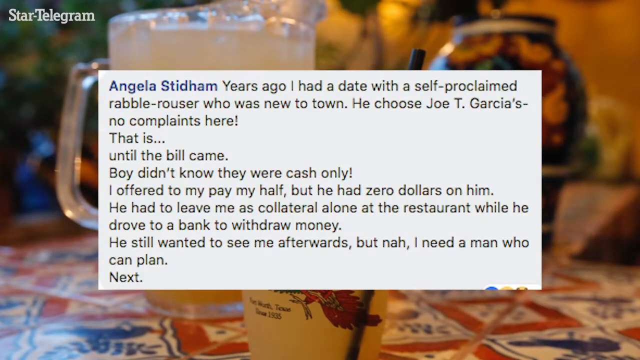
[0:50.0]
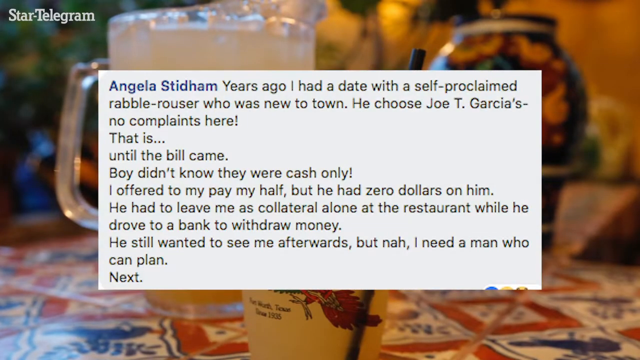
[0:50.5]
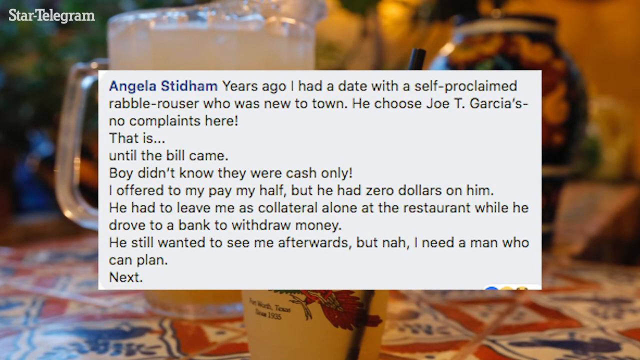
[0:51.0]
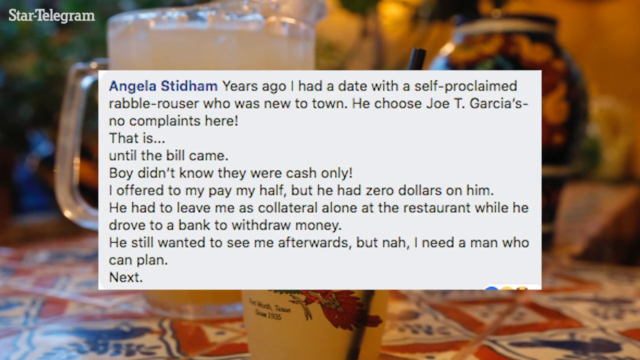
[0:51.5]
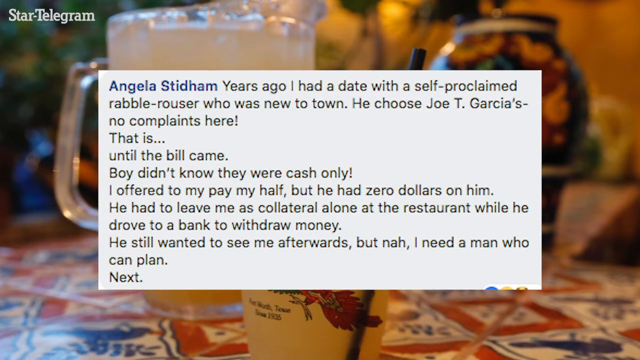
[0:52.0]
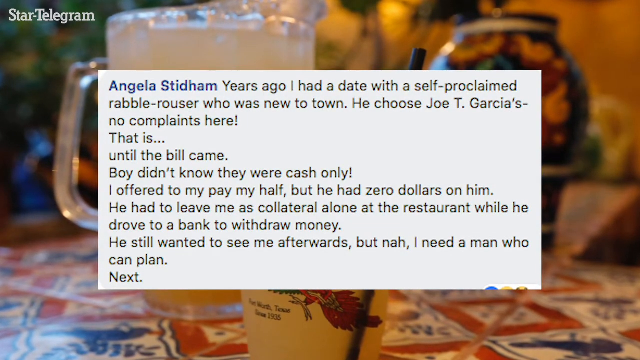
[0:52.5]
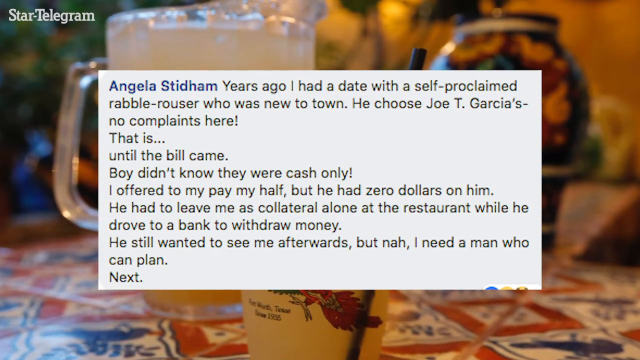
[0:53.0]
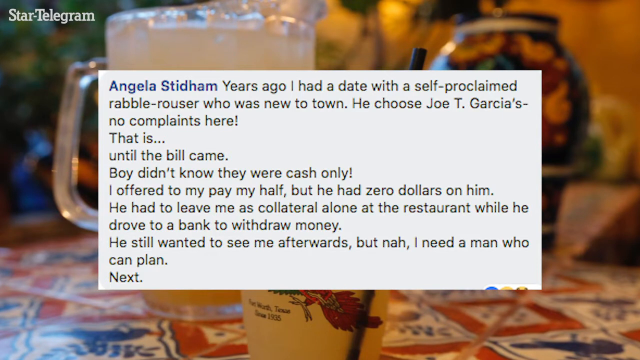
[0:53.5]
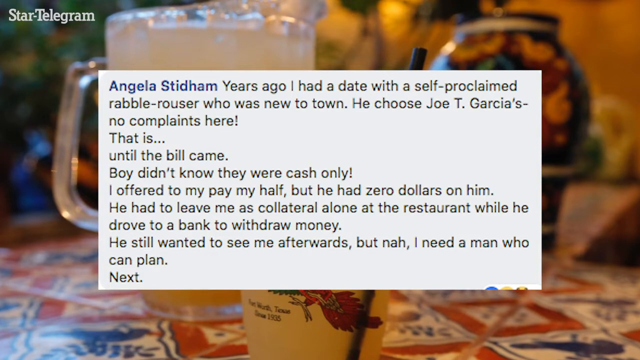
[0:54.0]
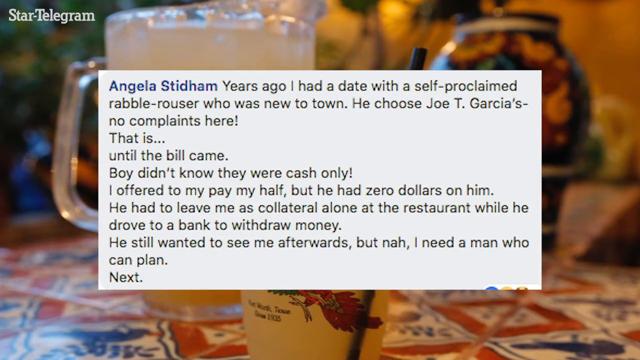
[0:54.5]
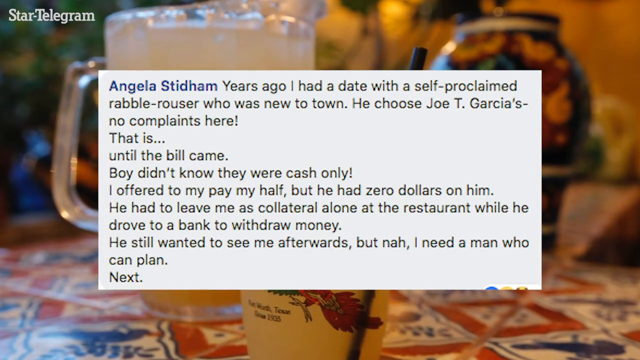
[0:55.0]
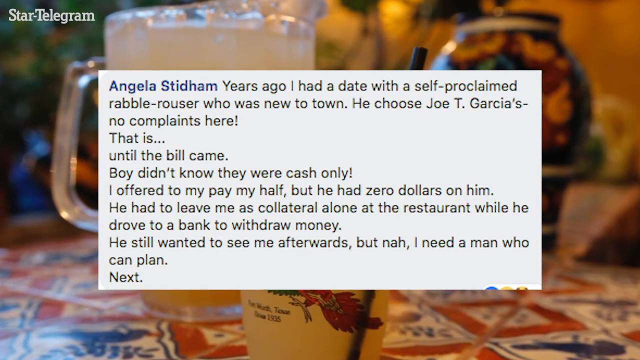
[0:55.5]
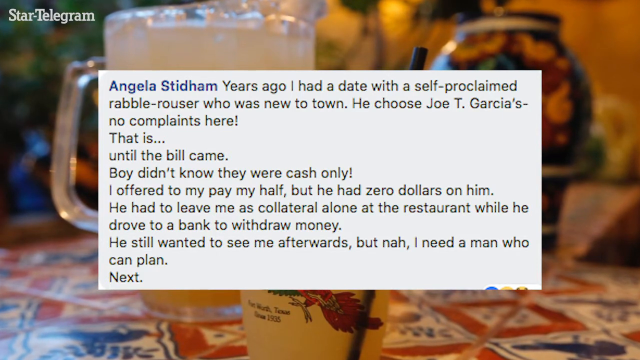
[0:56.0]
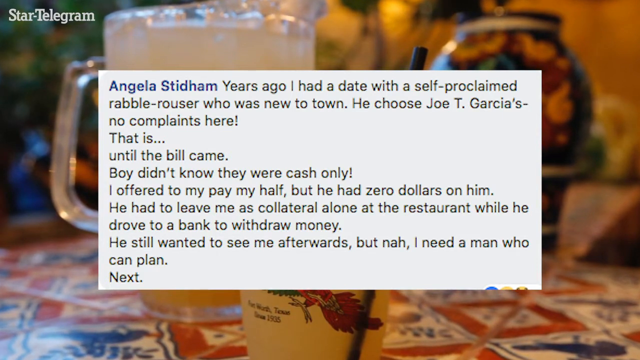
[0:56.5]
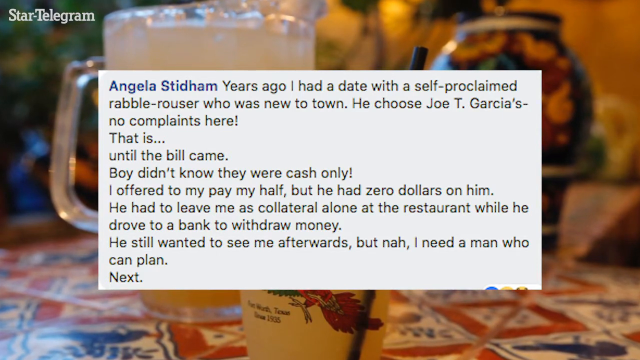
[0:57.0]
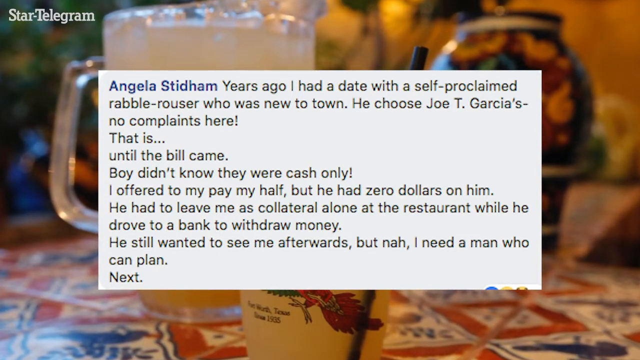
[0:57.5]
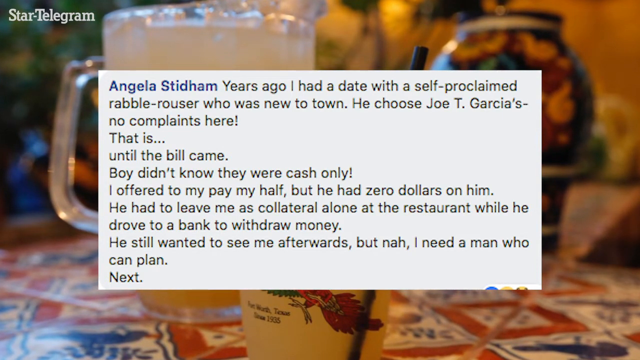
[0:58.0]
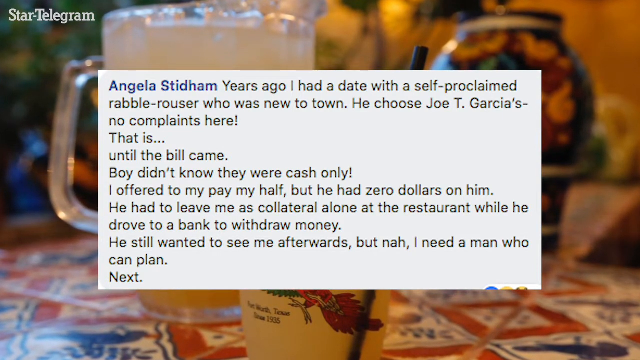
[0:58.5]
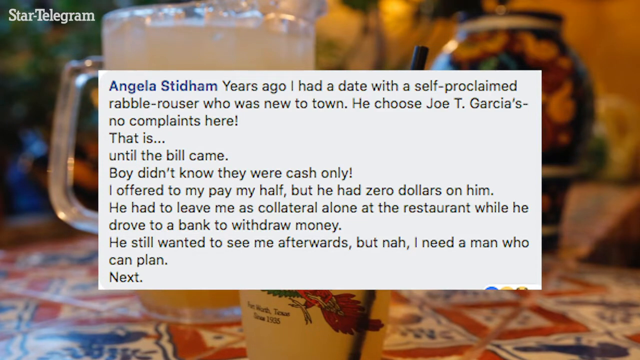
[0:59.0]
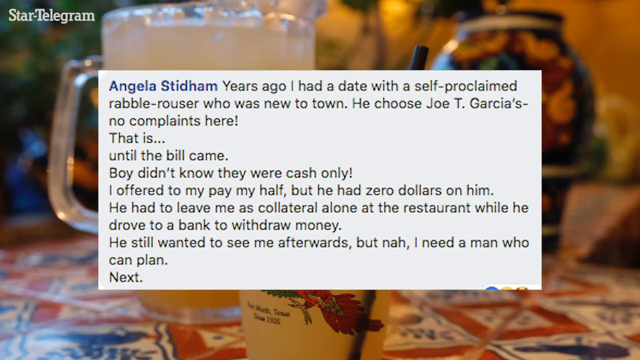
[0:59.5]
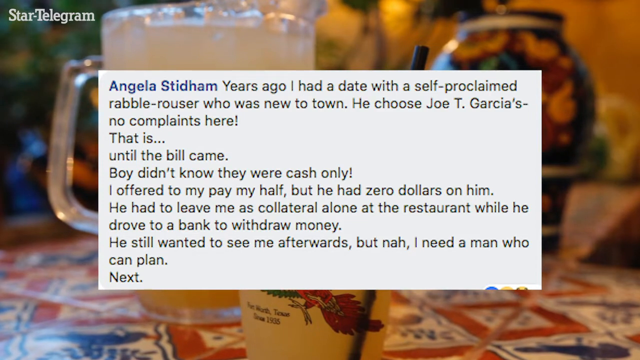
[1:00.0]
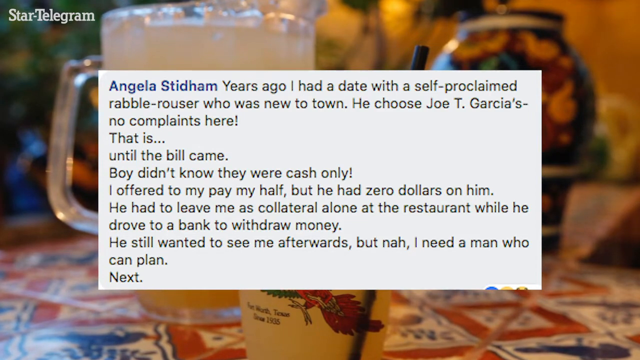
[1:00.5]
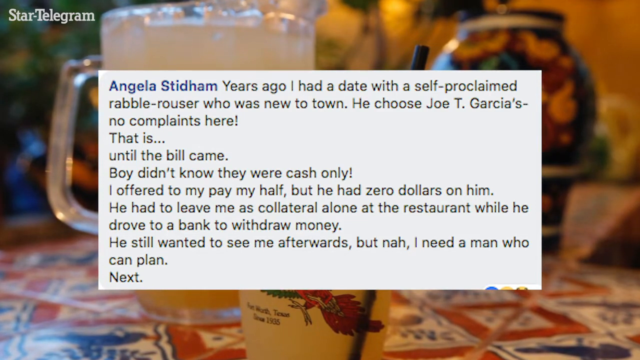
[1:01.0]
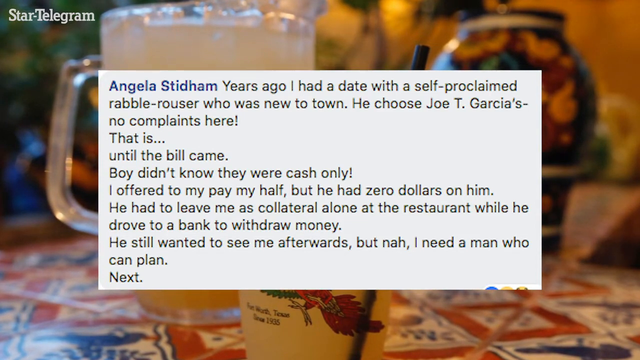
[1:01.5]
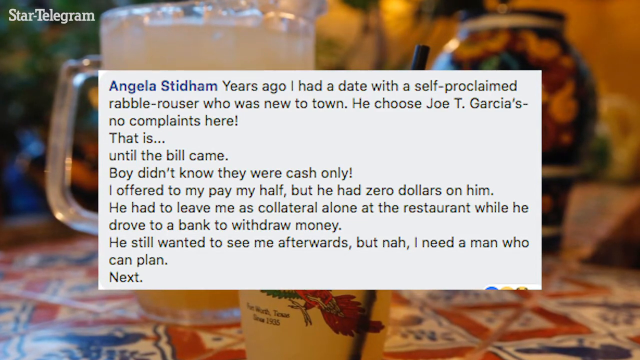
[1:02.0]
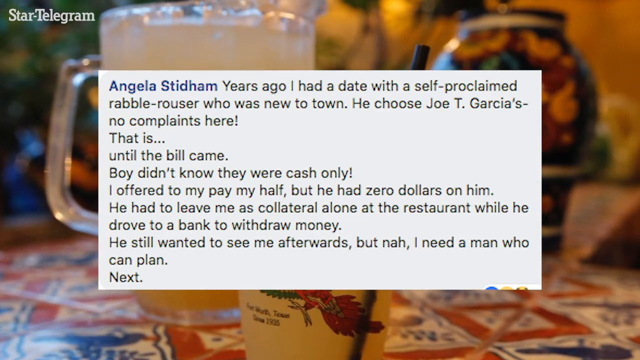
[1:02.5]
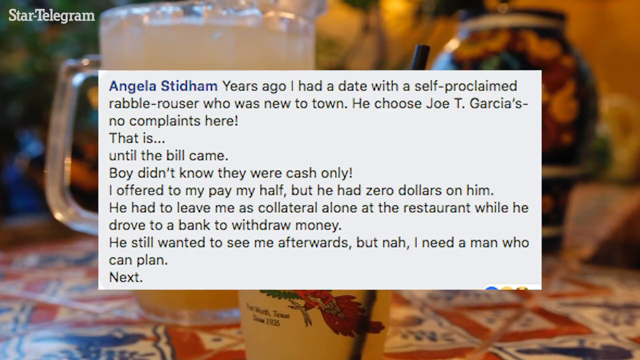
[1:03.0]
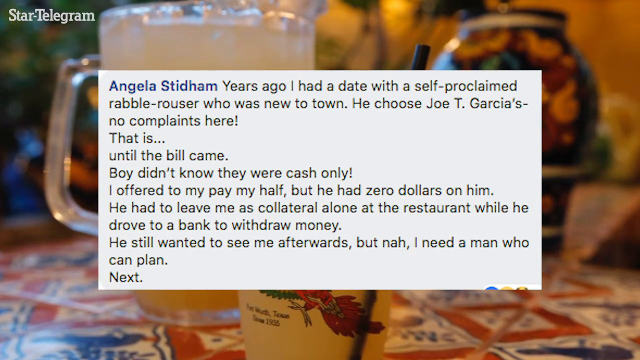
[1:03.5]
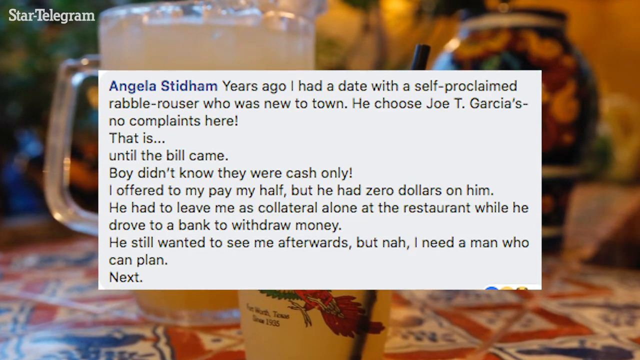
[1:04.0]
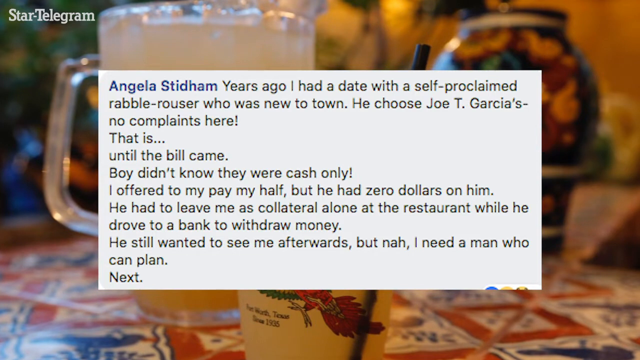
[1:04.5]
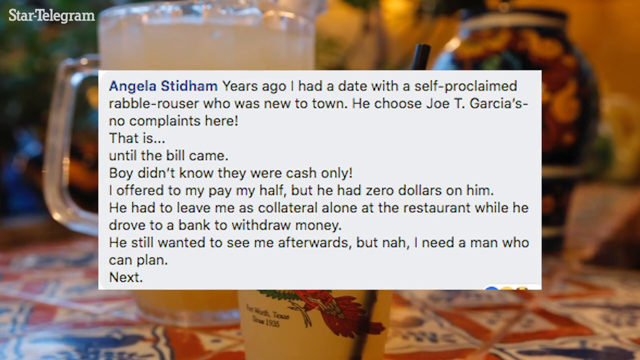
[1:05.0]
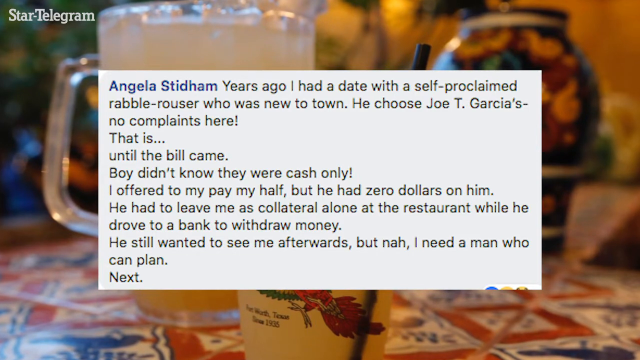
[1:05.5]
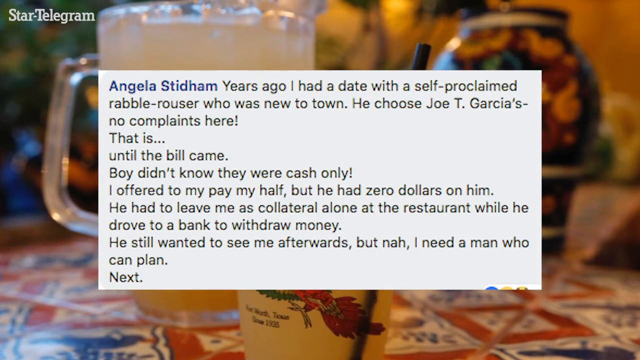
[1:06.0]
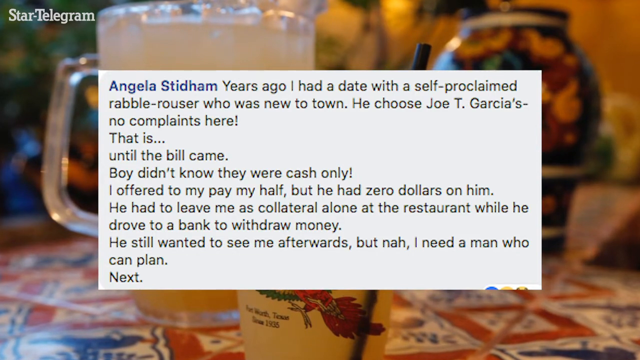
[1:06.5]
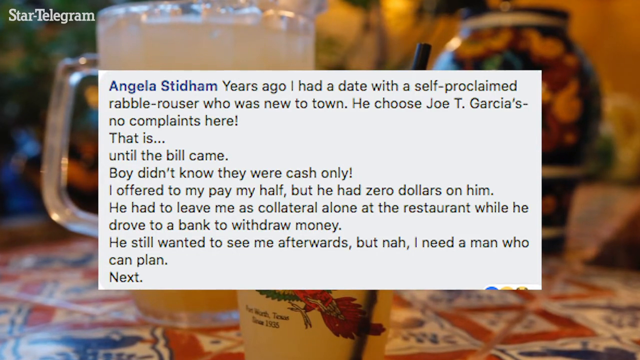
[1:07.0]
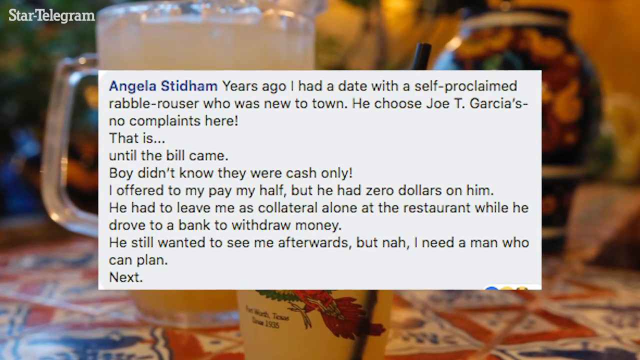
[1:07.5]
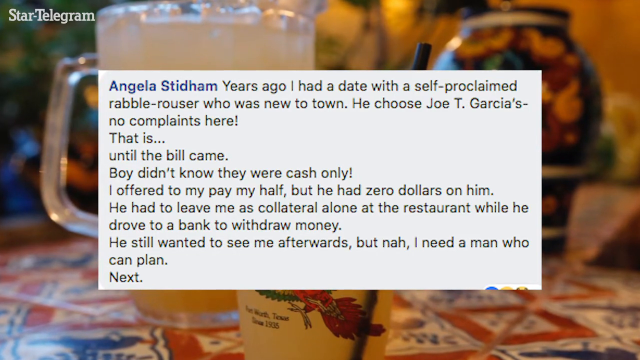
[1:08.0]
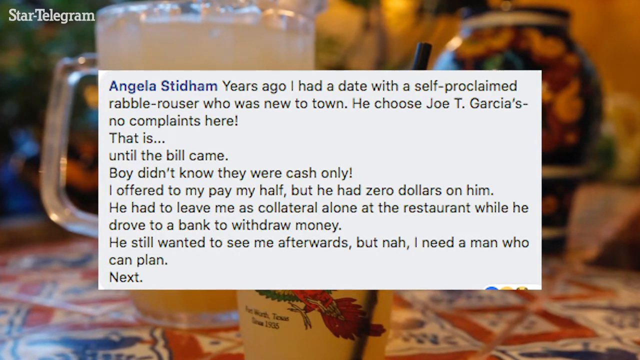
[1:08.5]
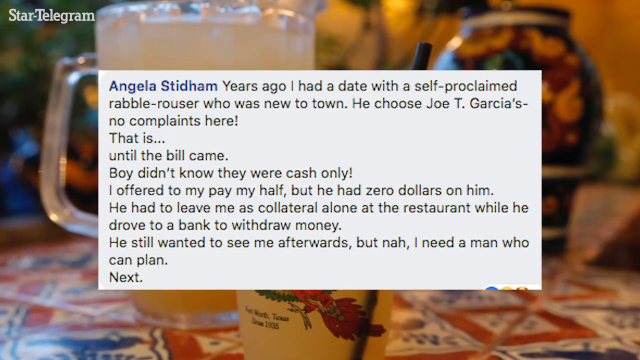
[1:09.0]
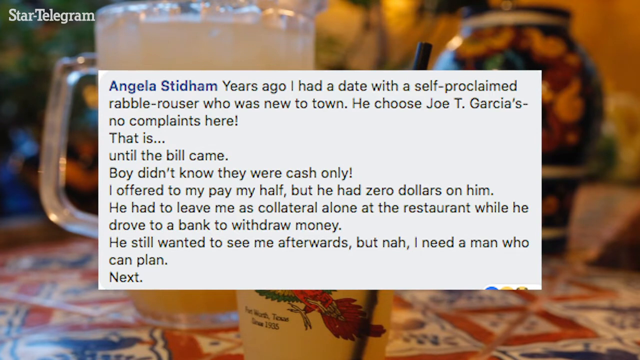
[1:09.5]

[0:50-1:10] A picture shows a cup with a drink in it, another cup with flowered designs, and a blurred vase in the background, all on a flowered napkin on a table. Over it is a write-up beginning "Angela Stidham said, Years ago," which continues "He chose Joe T. Gracious, no complaints here. That is, until the bill came, boy didn't know they were cash only. I offered to pay my half. He had zero dollars on him. He had to leave me as collateral, alone in the restaurant, while he drove to a bank to withdraw money. He still wanted to see me afterwards". There is no movement; only the write-up is shown. The write-up is written in white, though some of the writing appears in blue font and the rest in black font.